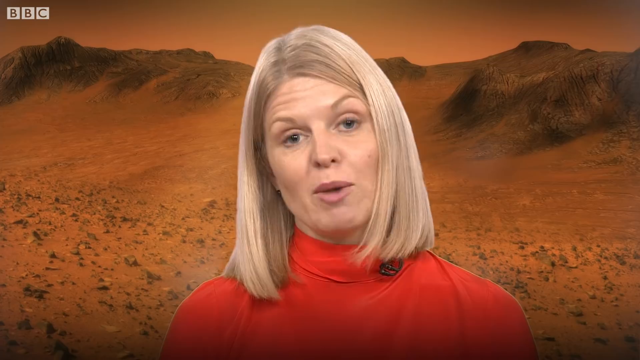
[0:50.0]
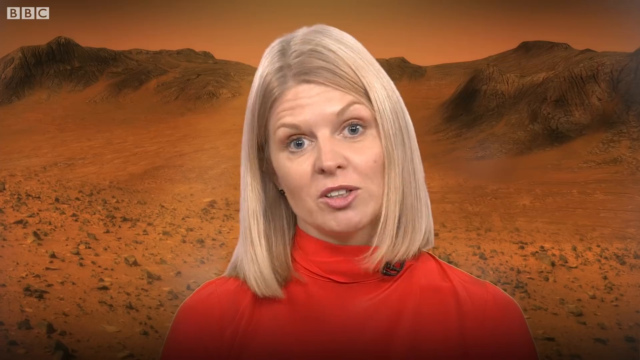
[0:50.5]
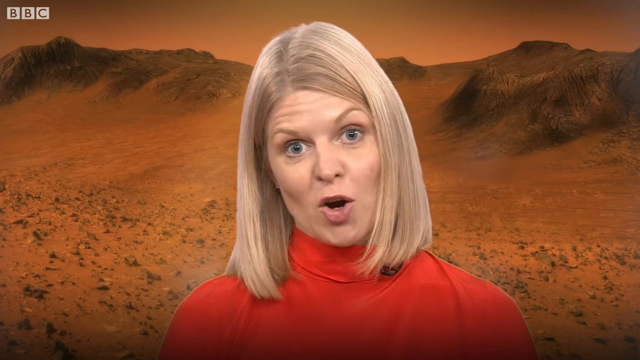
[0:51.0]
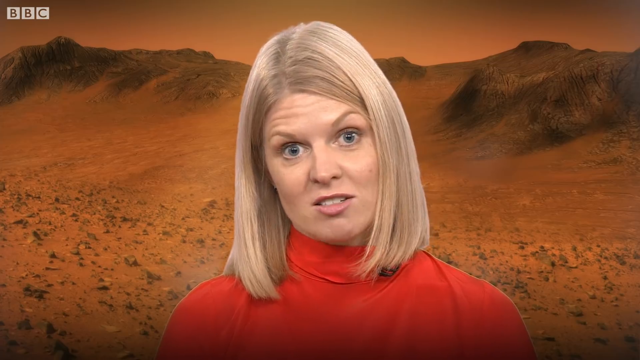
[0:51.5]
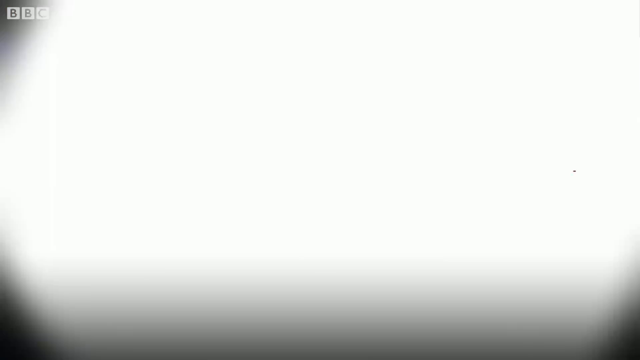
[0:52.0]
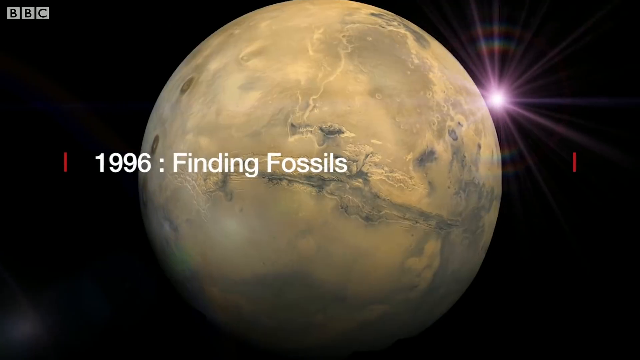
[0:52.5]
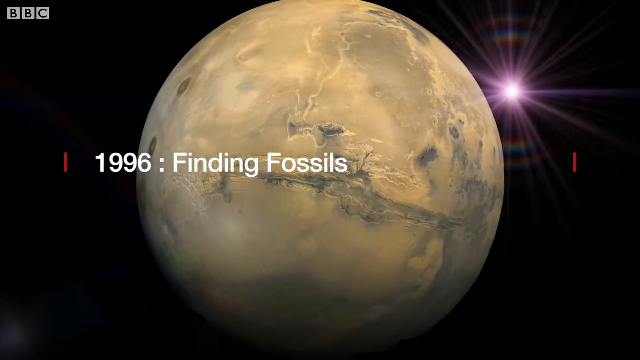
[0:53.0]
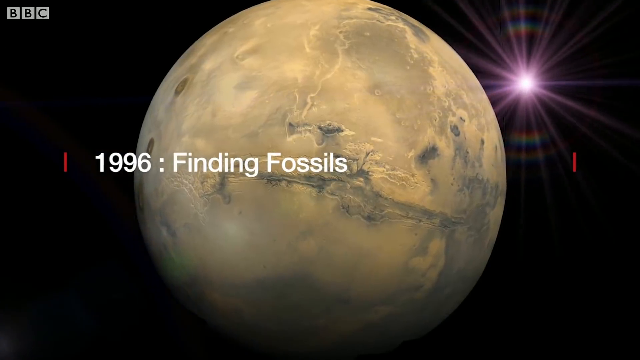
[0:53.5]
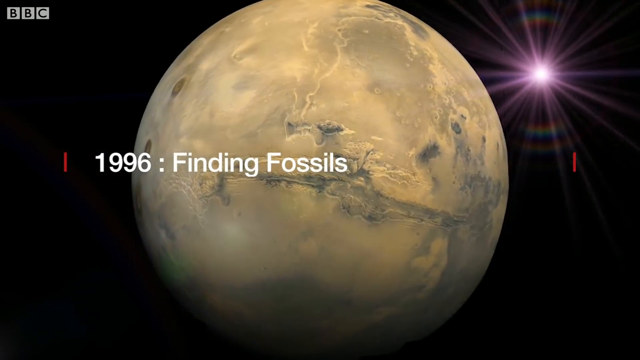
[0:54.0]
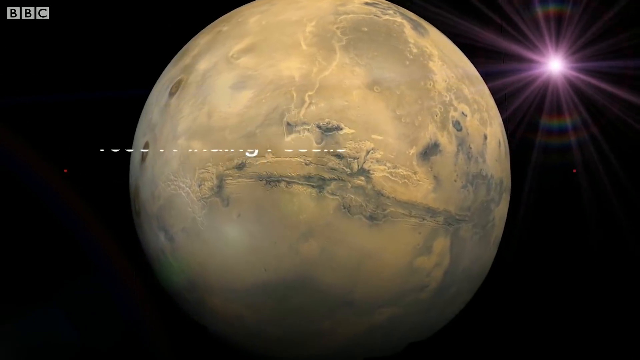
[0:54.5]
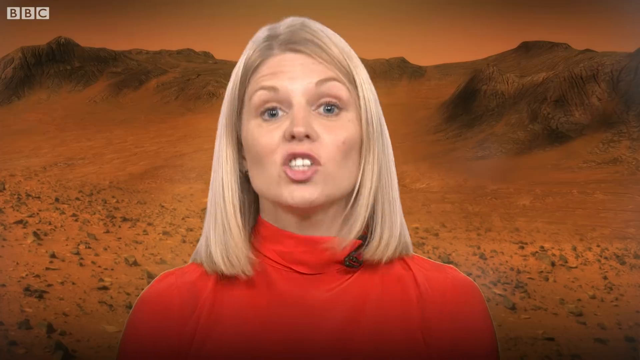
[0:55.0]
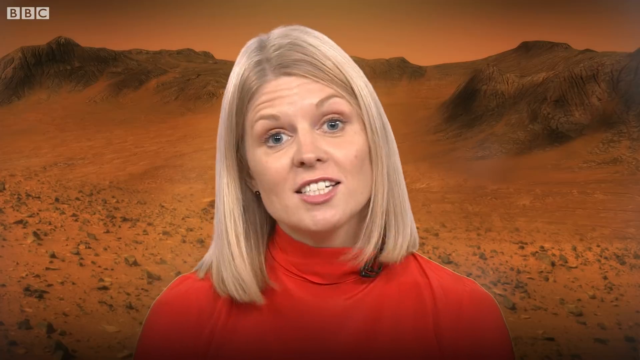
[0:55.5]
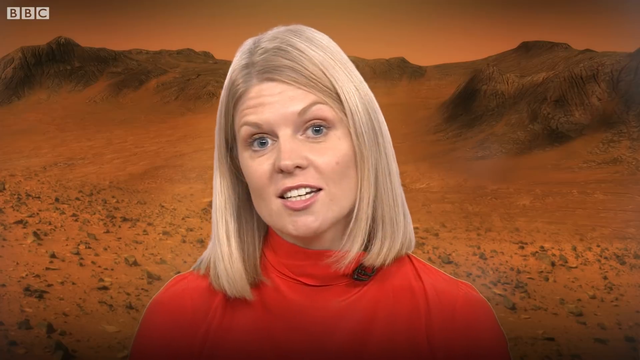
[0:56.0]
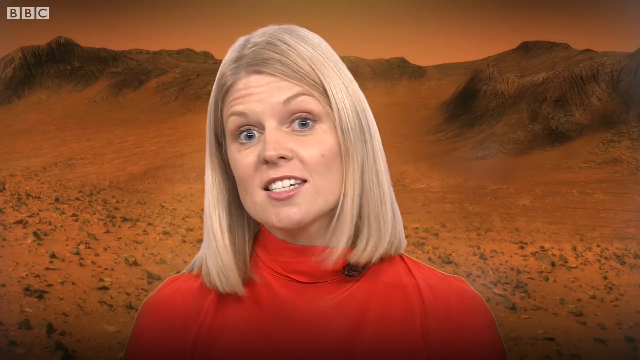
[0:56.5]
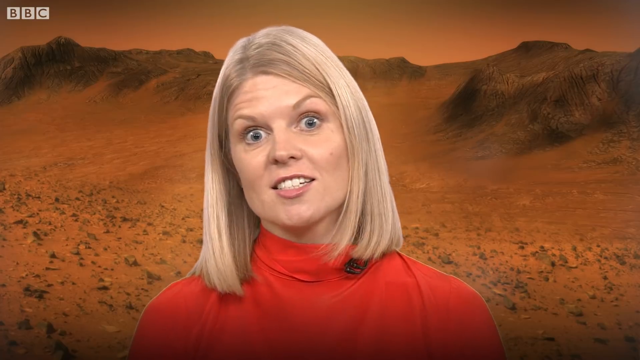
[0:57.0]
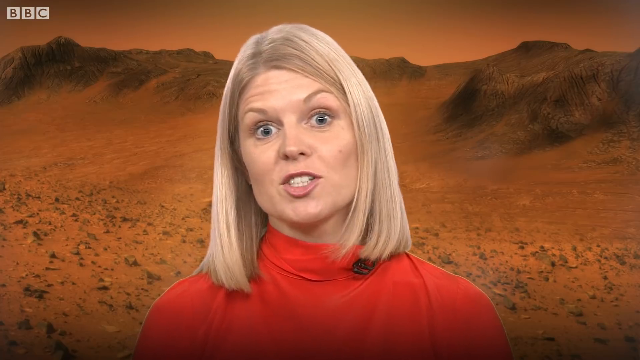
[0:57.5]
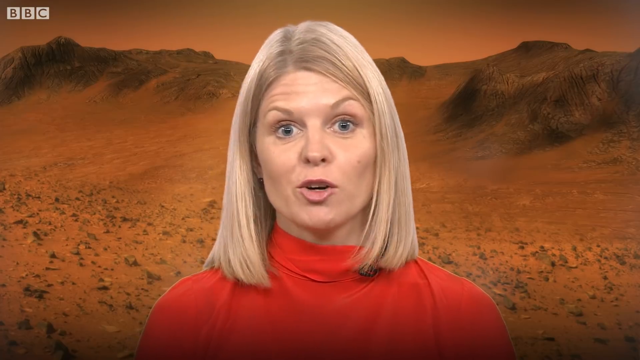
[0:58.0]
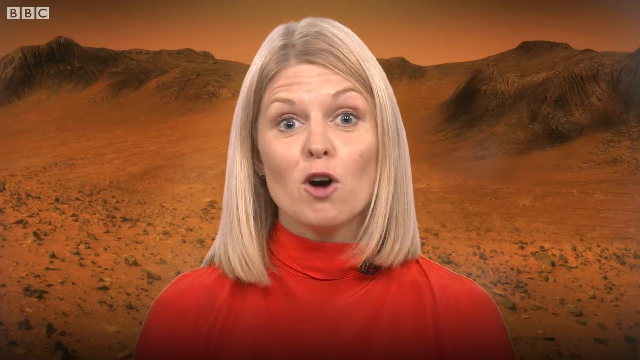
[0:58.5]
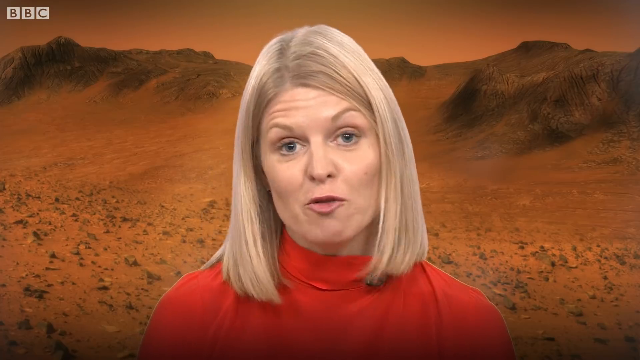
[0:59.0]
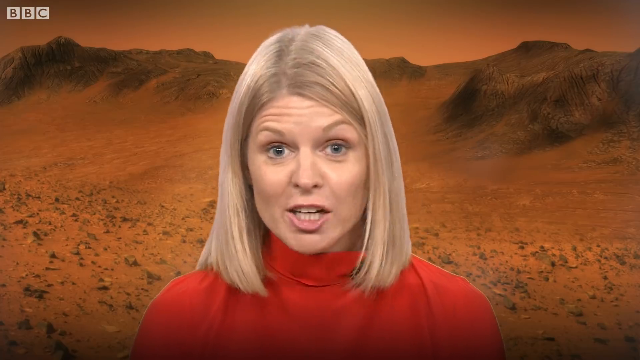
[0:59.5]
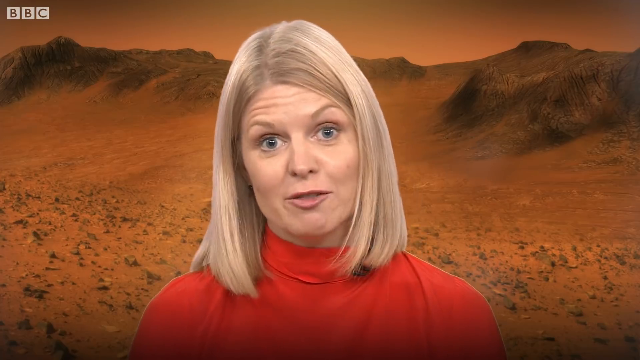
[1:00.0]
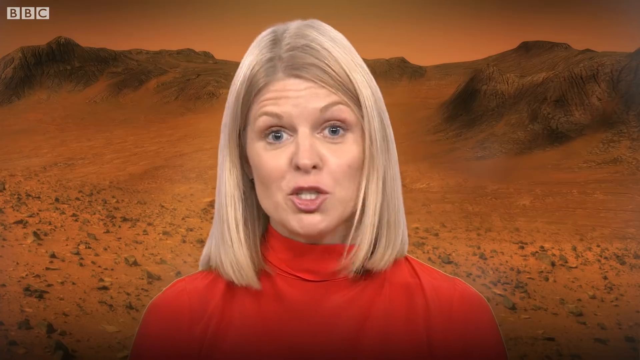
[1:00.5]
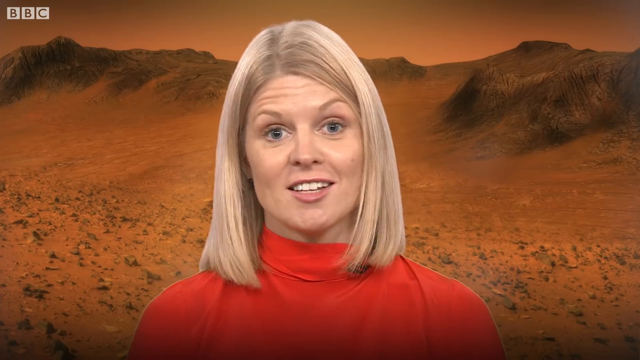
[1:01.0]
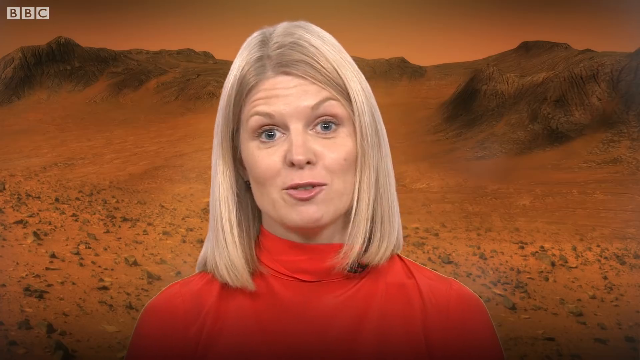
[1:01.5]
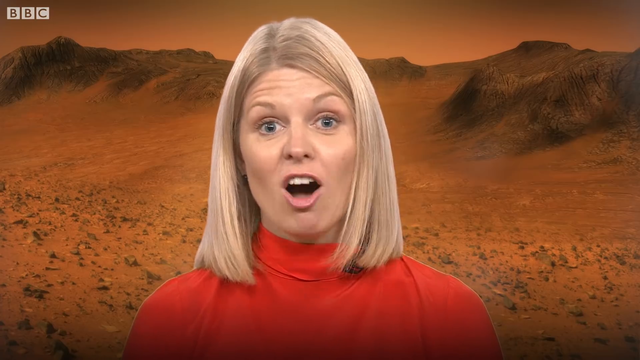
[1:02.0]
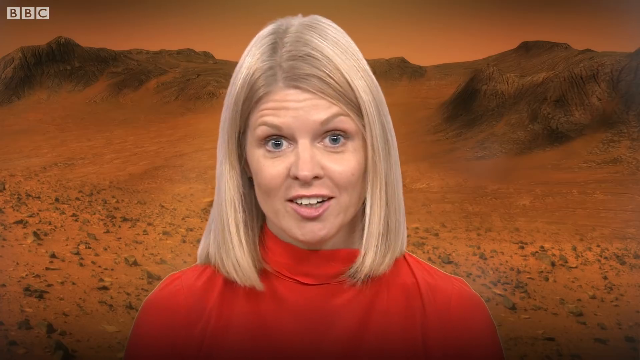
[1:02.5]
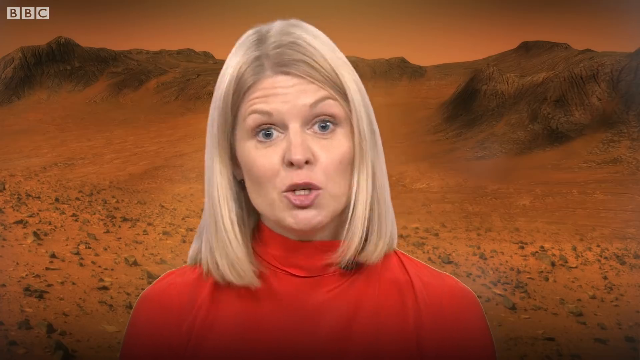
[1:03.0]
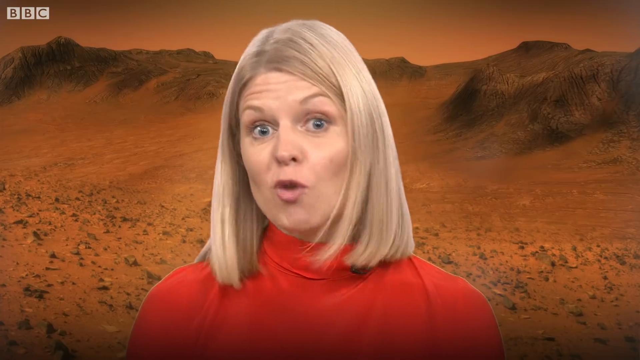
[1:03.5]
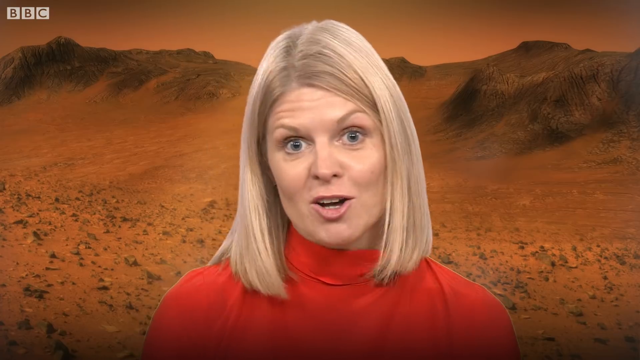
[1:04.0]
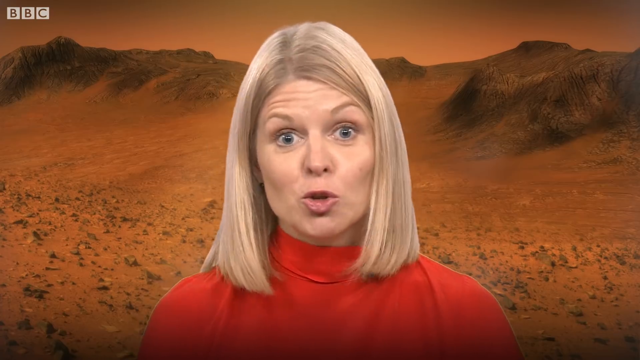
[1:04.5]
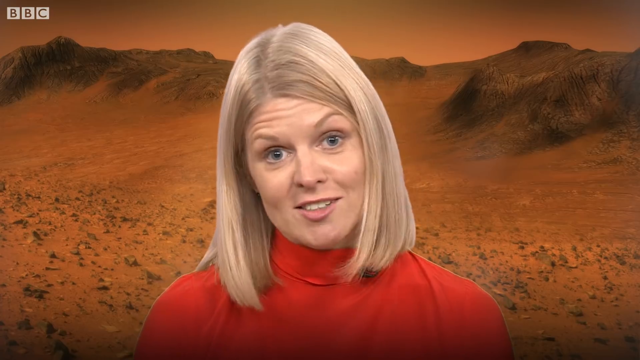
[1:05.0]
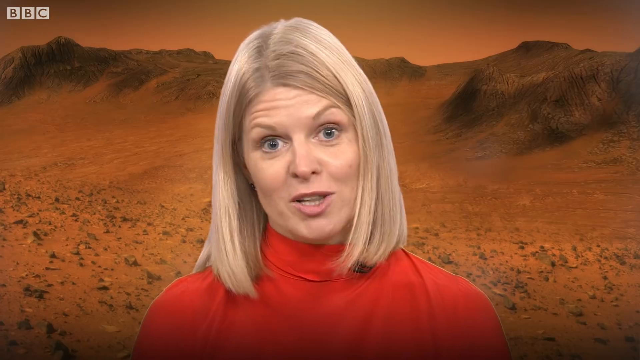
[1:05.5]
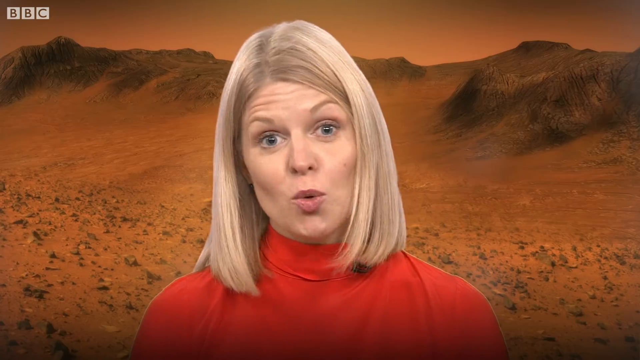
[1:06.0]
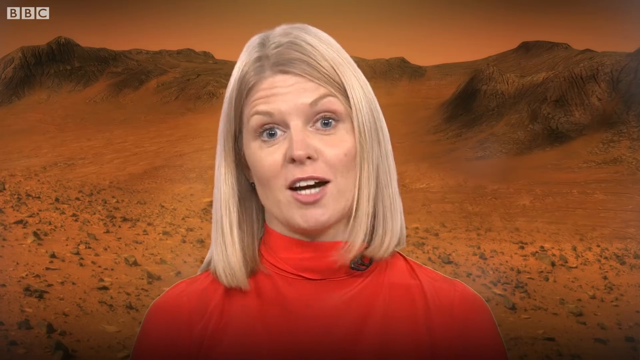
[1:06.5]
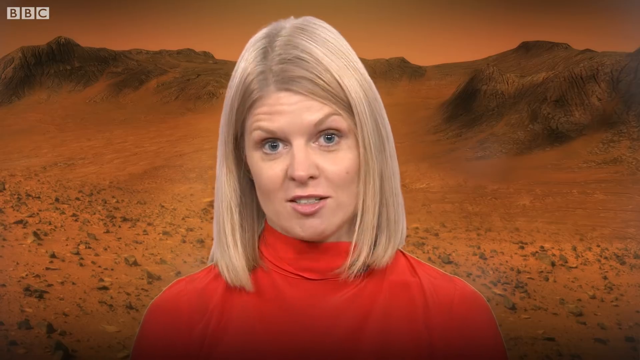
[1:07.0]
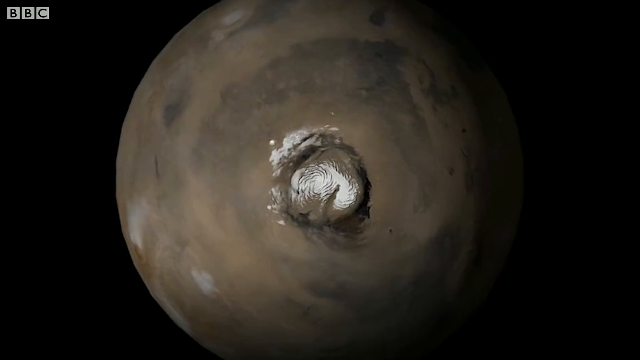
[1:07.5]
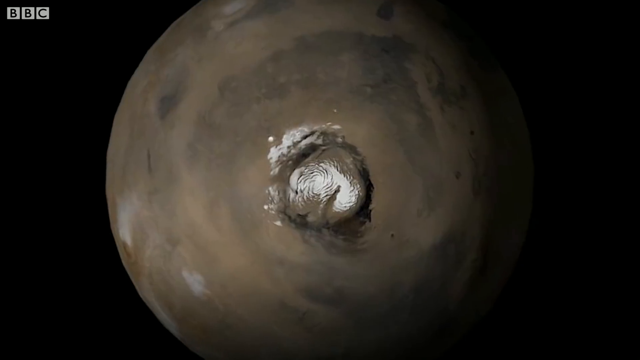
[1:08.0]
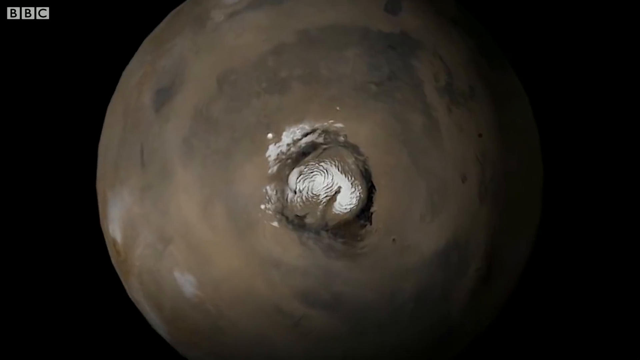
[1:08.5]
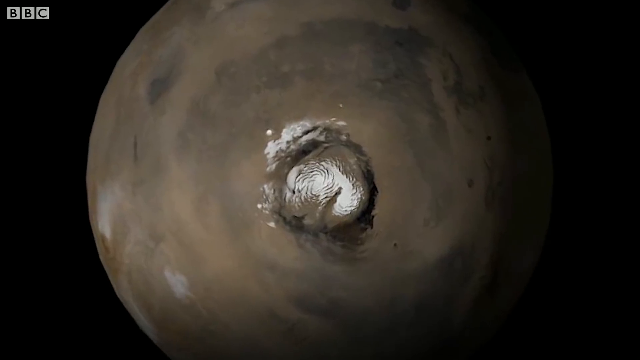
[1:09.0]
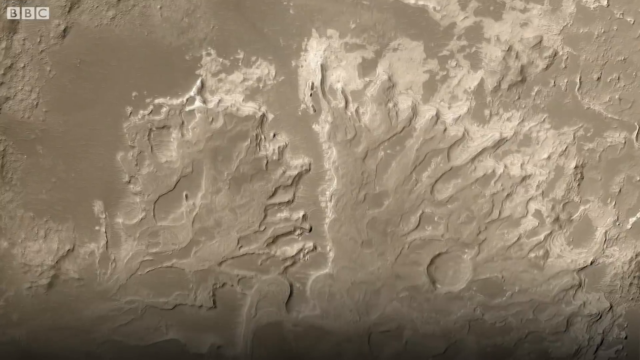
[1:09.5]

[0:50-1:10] A BBC News presenter, a white woman in a red top, appears on the screen, with a BBC logo at the top. An animated planet that looks like Earth then appears and rotates on the screen. A monochromatic light in the background seems to focus on the planet and produces rainbow-like light. Text on the screen reads "1996 - fossil fuels". The presenter is then seen again, talking and explaining the situation in front of a desert scene that looks like Earth. An animation of an Earth-like planet in a beige colour is seen again, this time moving closer as the camera zooms in and out.